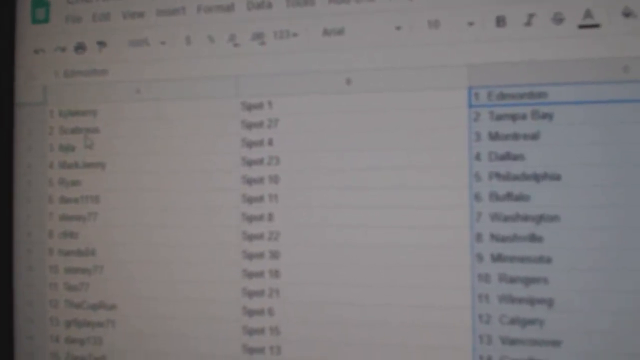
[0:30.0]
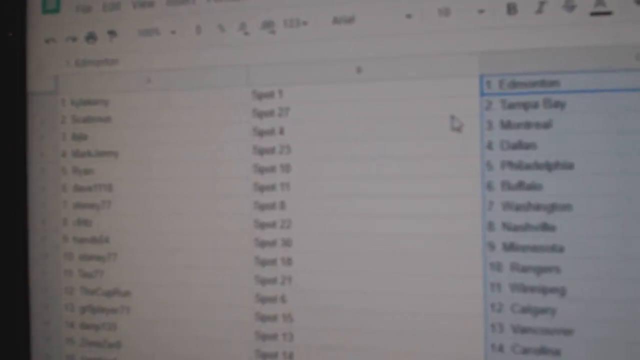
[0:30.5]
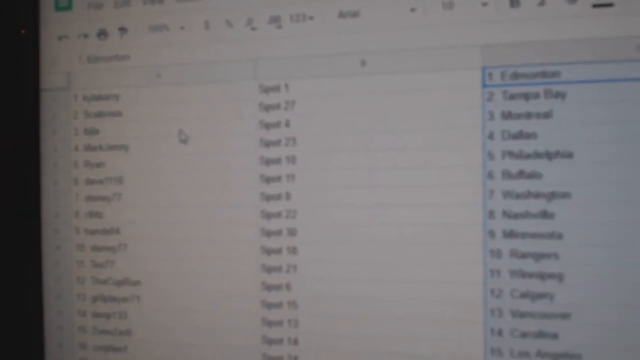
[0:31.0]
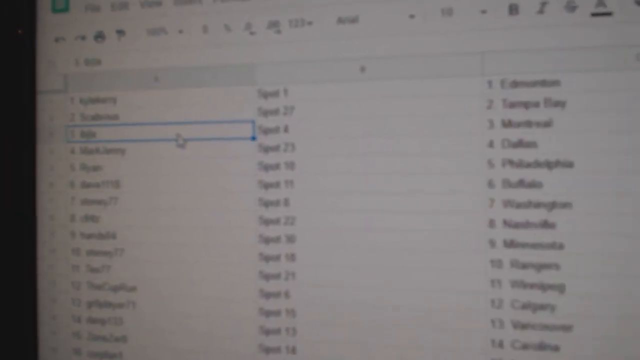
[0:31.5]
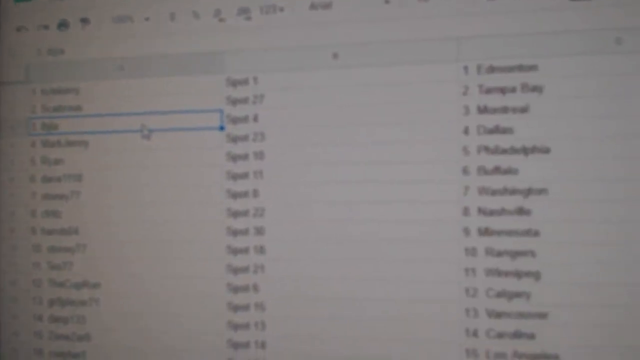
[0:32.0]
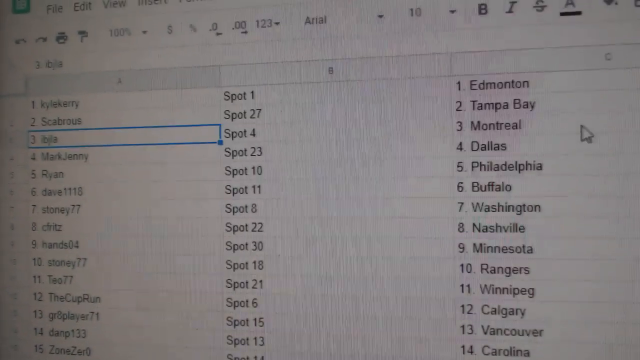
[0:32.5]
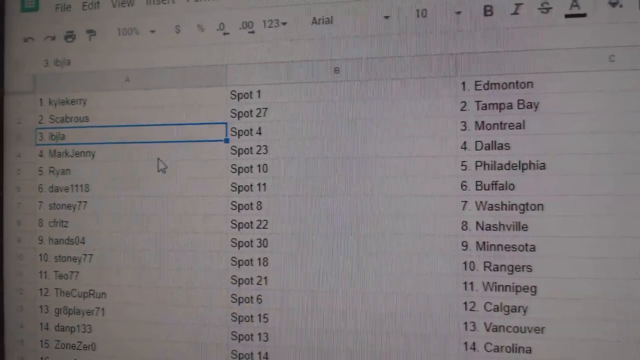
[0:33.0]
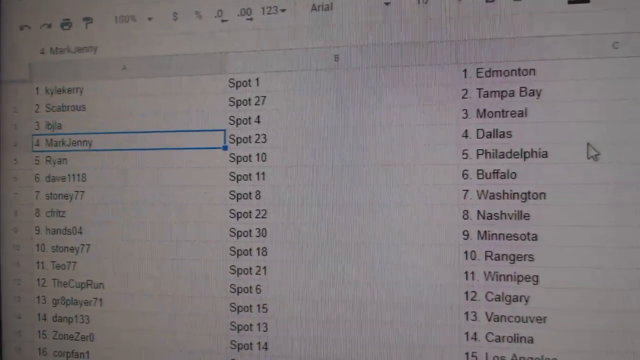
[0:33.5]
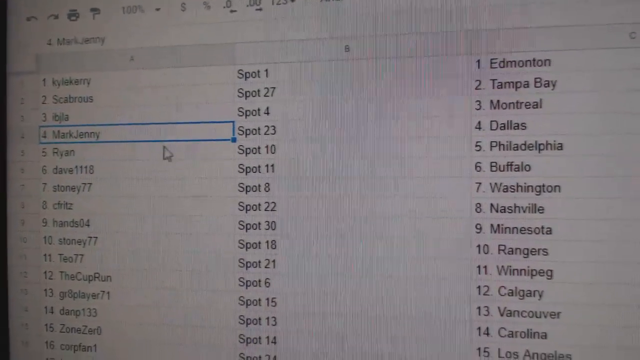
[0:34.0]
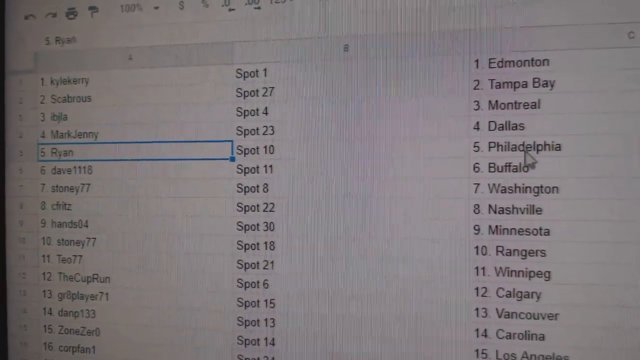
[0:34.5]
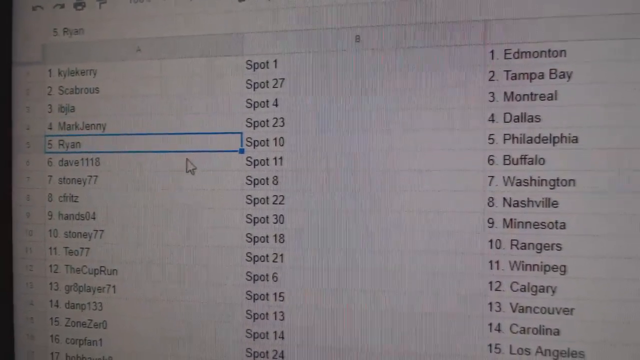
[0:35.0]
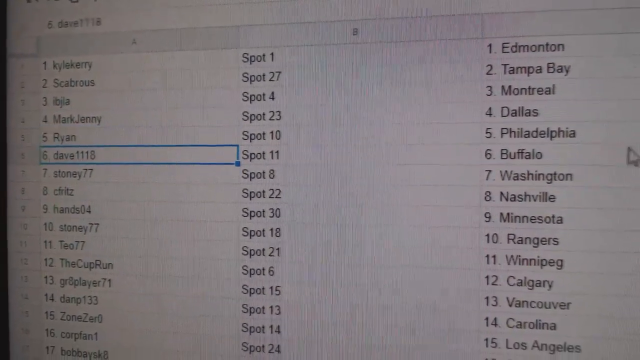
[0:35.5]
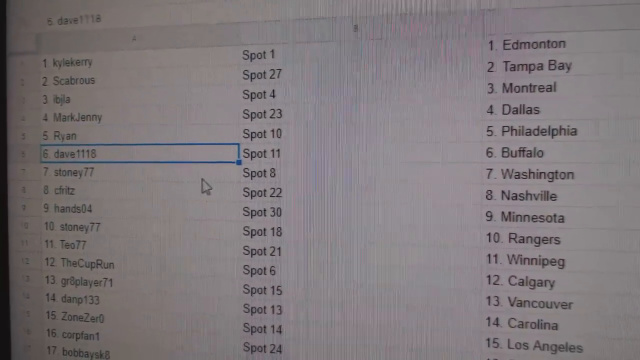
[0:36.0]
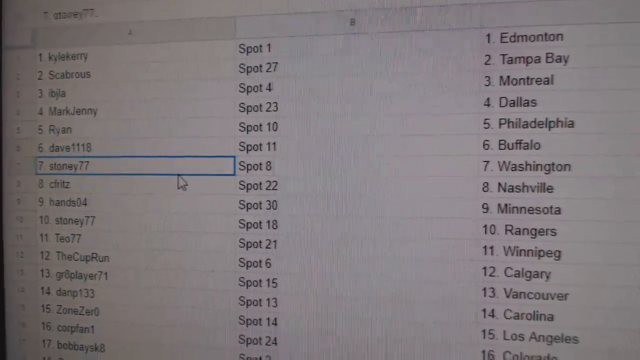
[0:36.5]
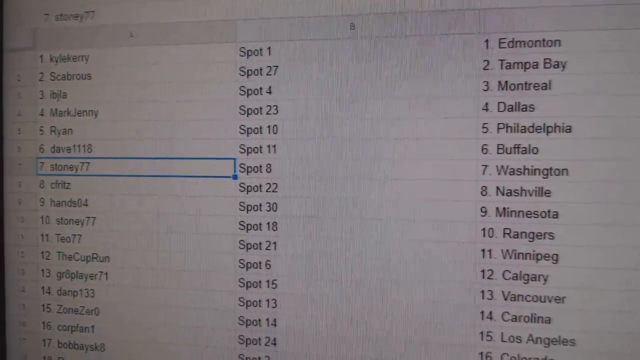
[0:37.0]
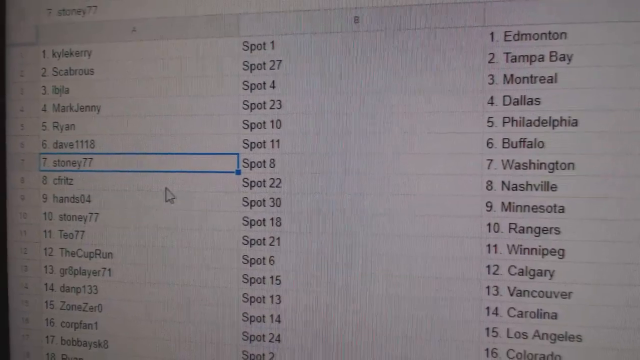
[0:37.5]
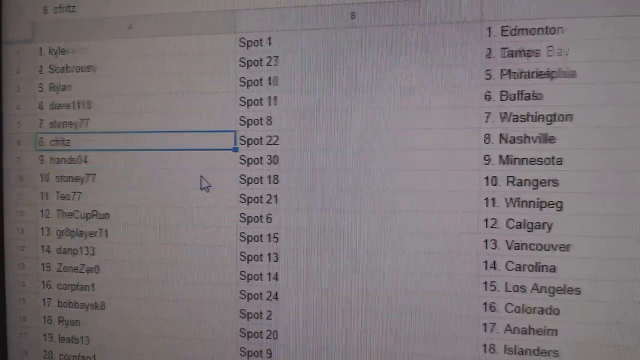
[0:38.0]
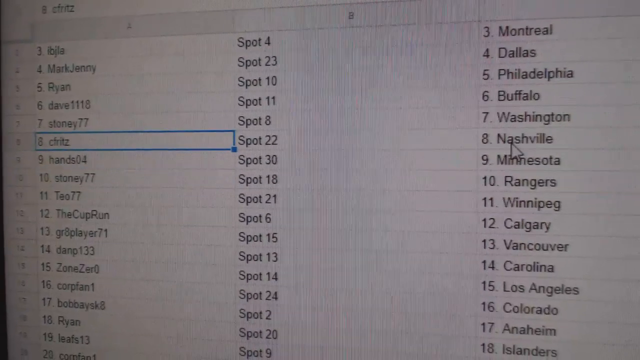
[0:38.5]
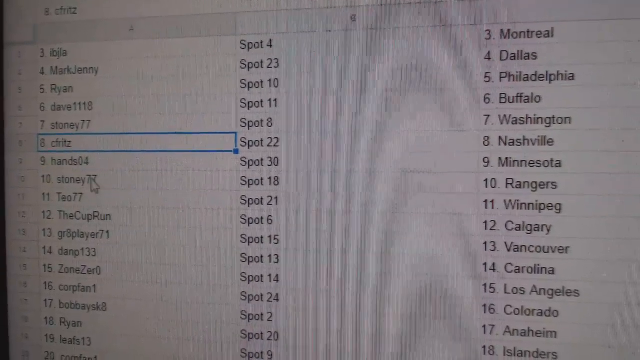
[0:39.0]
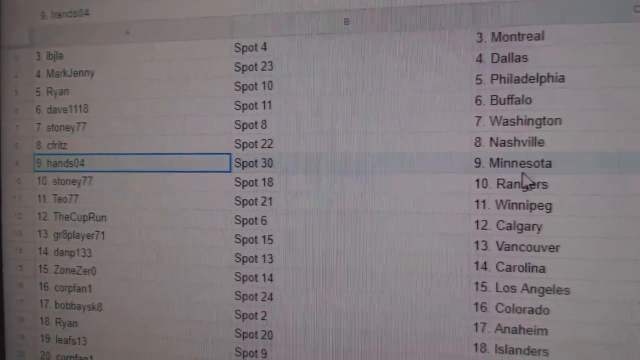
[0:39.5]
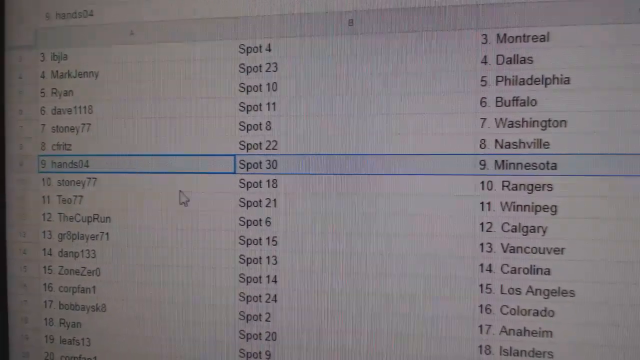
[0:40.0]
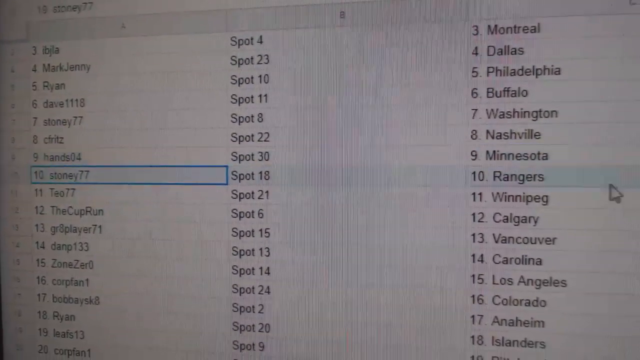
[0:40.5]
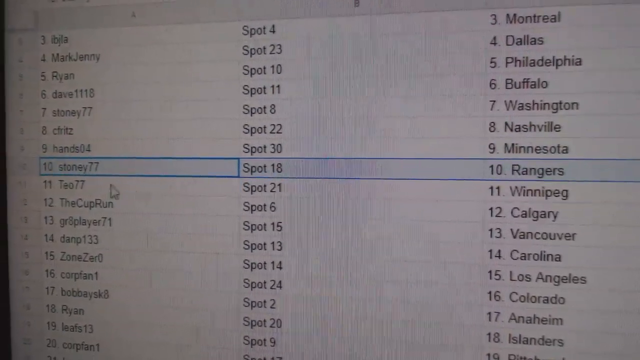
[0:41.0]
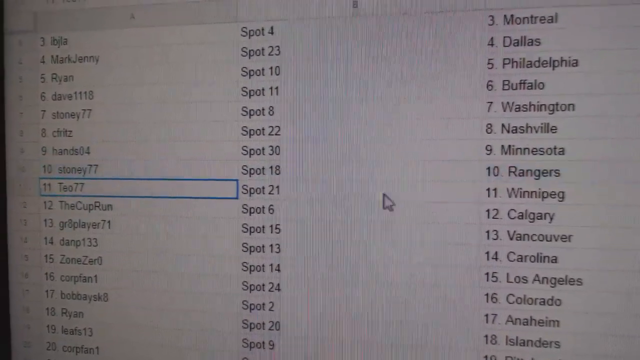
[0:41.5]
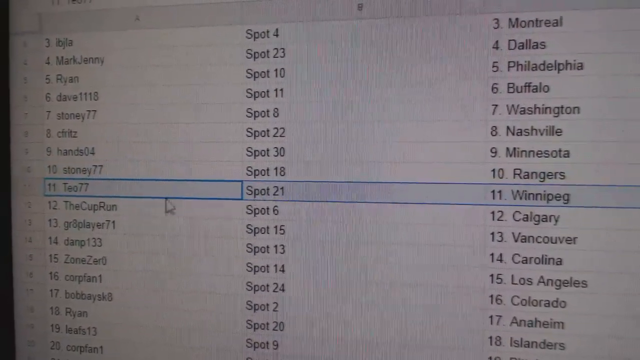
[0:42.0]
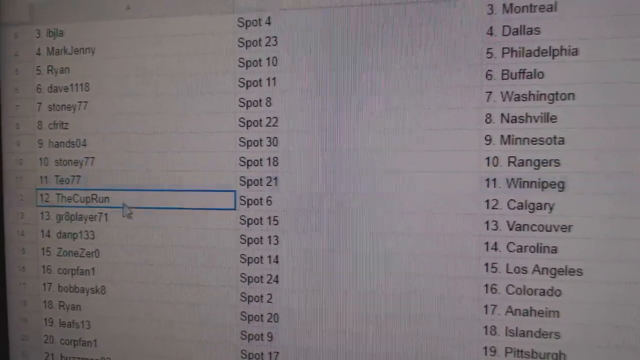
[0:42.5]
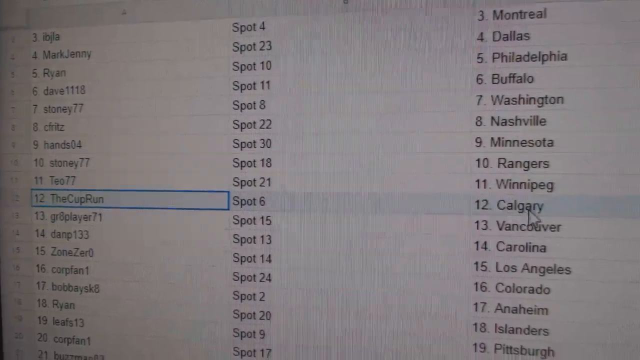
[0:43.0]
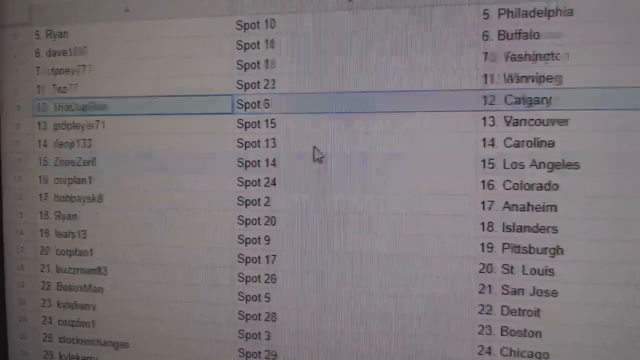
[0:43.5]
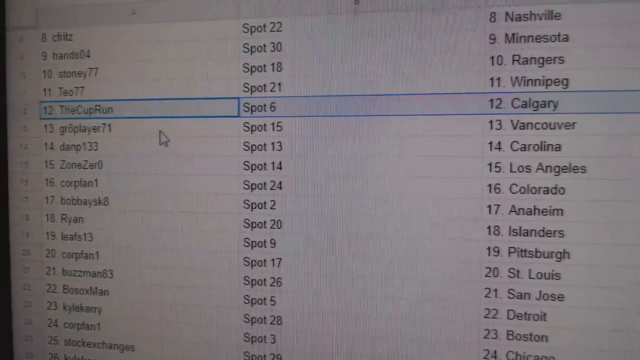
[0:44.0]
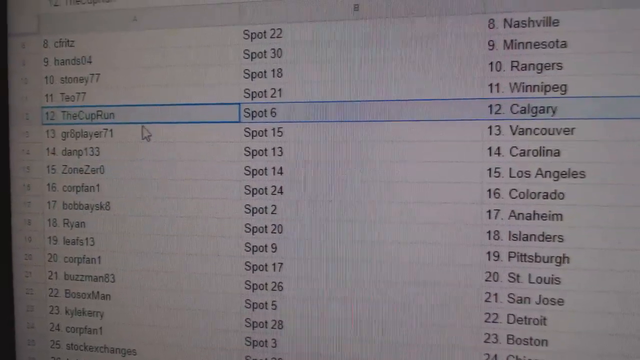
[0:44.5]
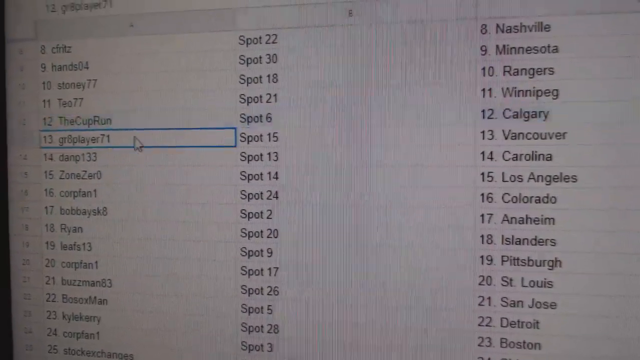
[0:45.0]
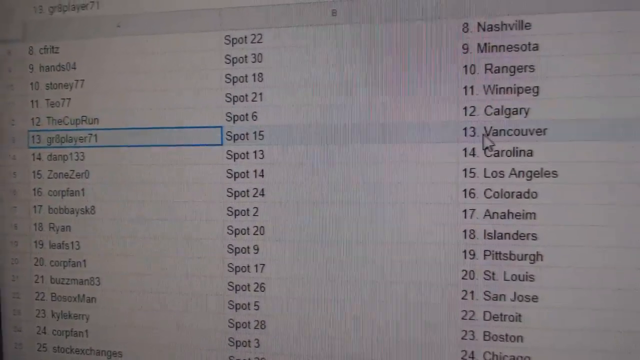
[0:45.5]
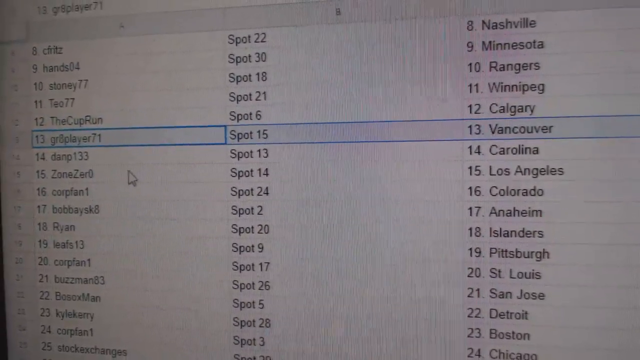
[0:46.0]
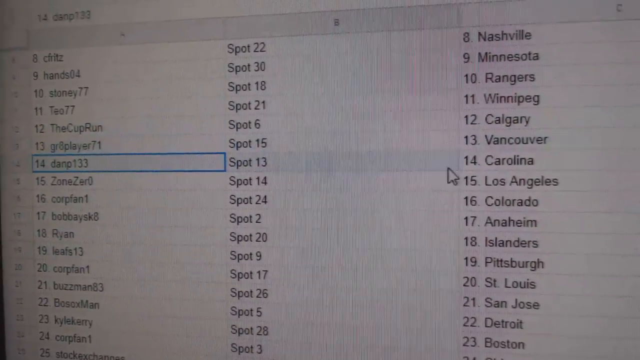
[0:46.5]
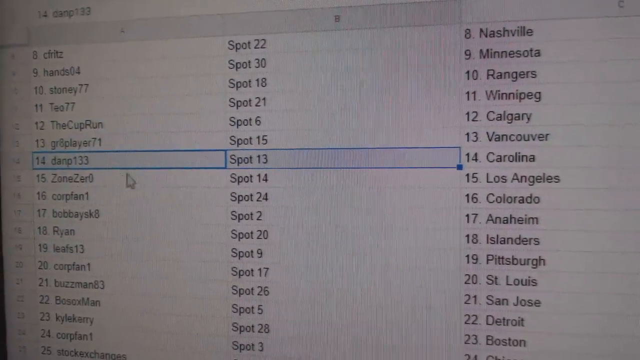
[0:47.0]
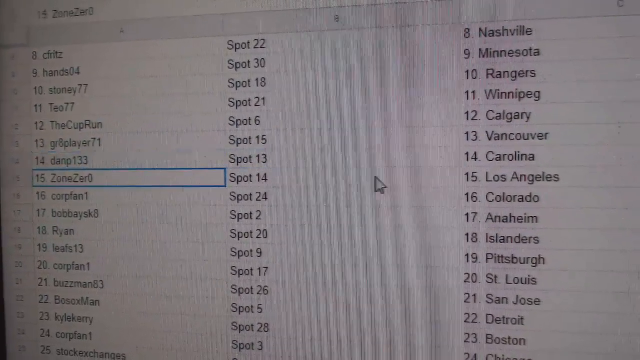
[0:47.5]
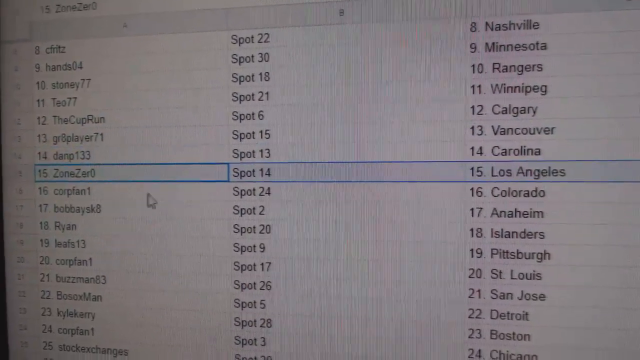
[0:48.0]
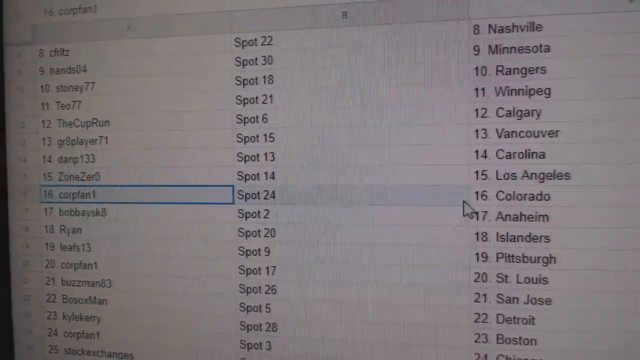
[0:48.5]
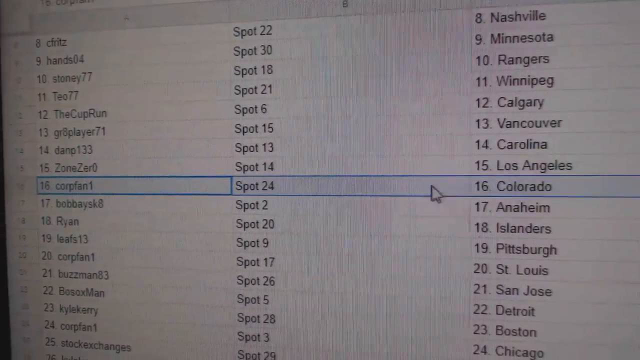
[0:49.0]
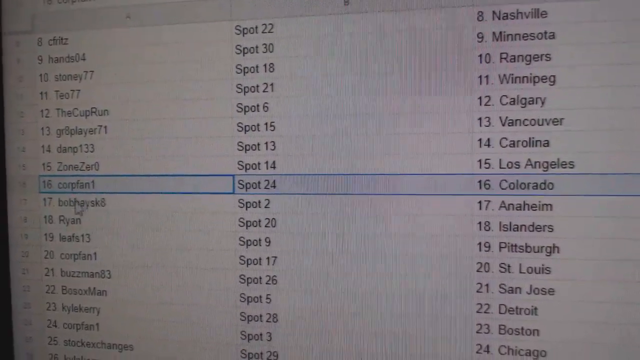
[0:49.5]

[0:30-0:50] The same worksheet is shown as the copied items are placed into different columns, with column A being filled. Numbers and spot numbers appear, and the names are scrolled through and highlighted. All the names are written in, and on the other side there are some other subnames as well. The headings at the top of the worksheet are now written differently, and the numbers, spot numbers and other copied entries are shown on the worksheet.